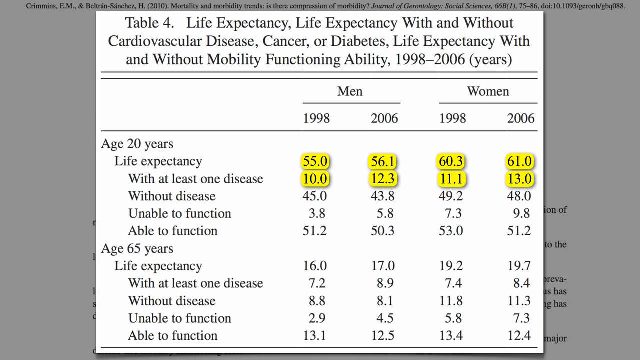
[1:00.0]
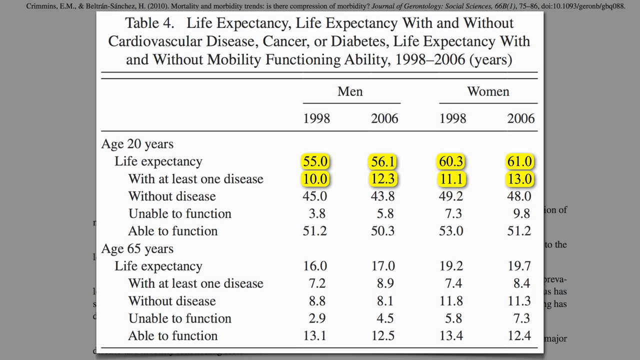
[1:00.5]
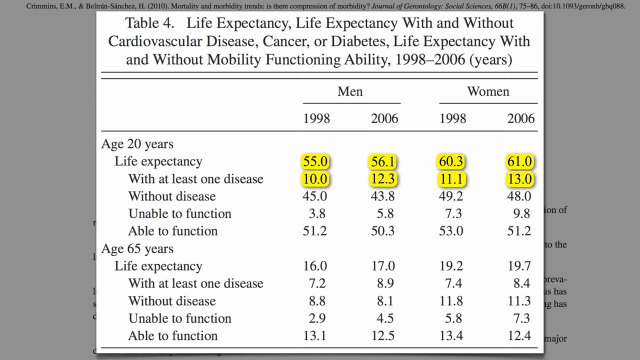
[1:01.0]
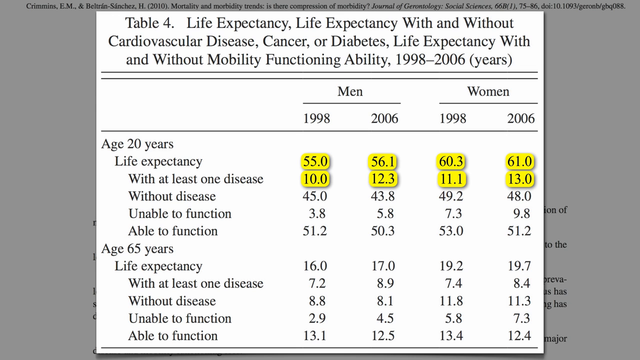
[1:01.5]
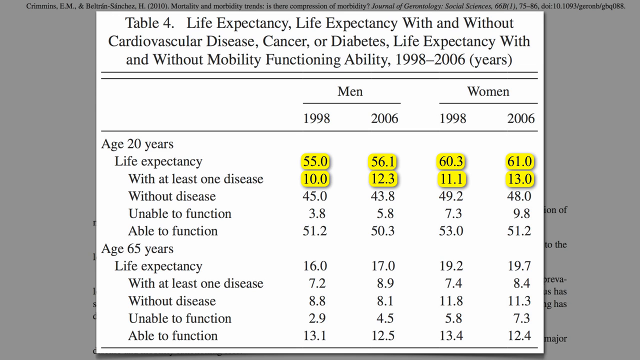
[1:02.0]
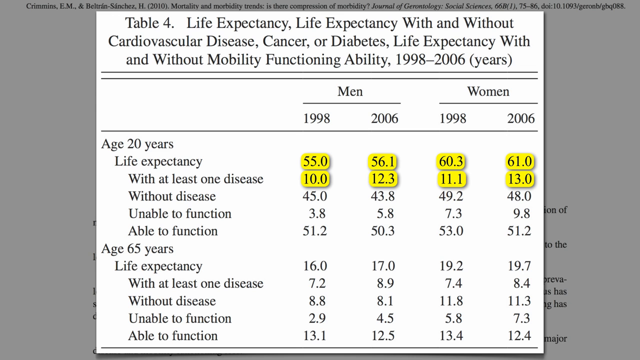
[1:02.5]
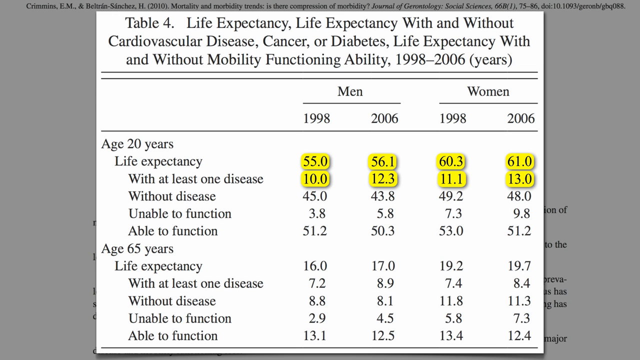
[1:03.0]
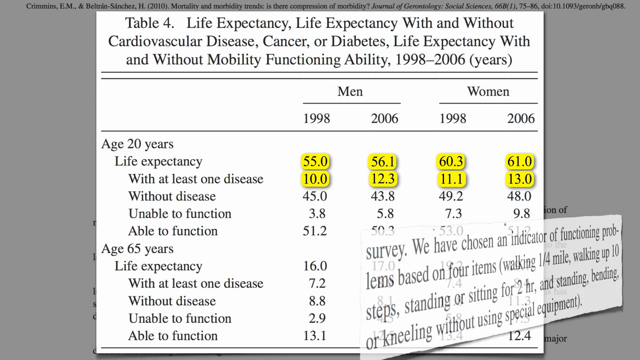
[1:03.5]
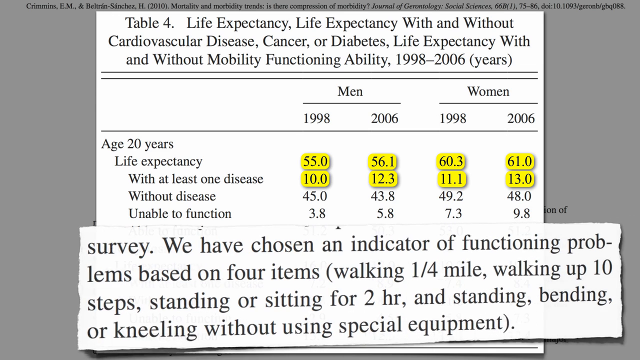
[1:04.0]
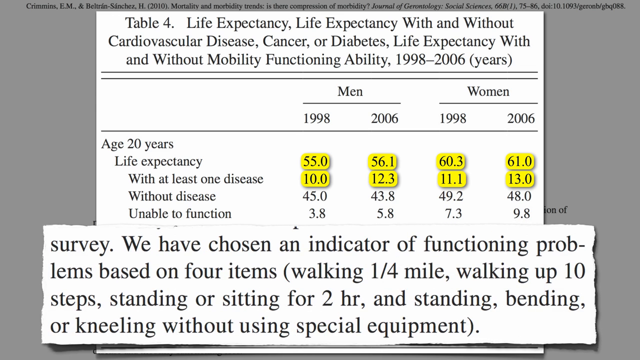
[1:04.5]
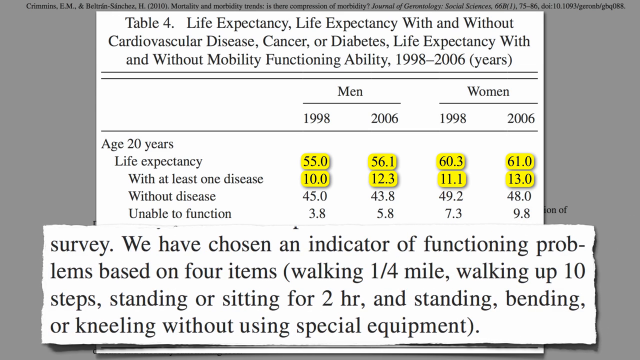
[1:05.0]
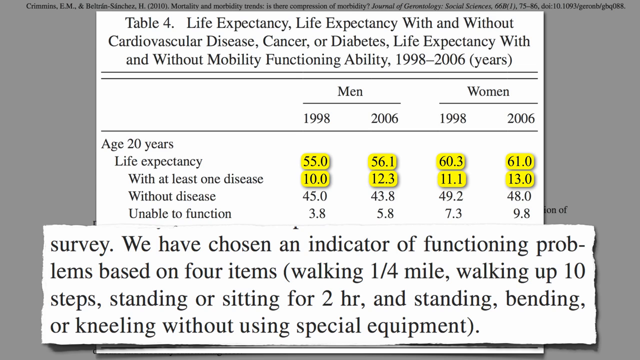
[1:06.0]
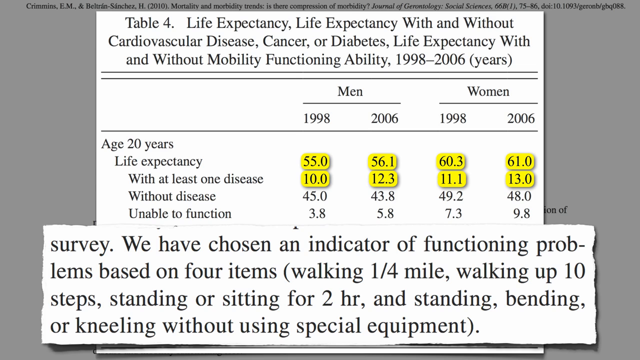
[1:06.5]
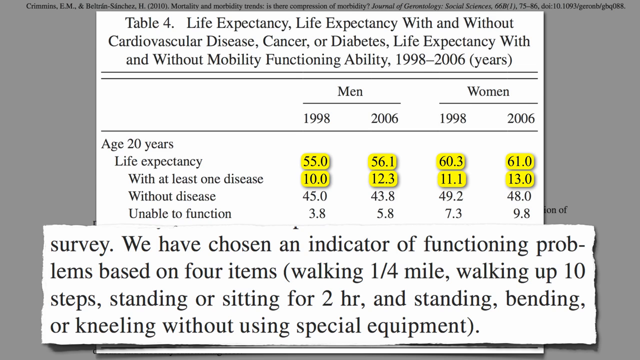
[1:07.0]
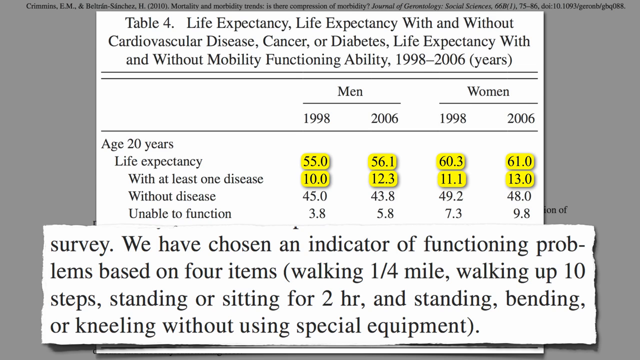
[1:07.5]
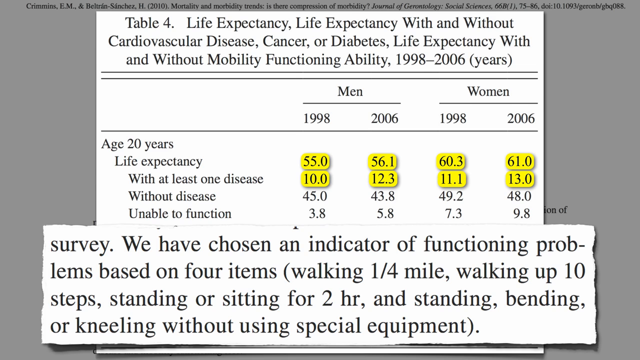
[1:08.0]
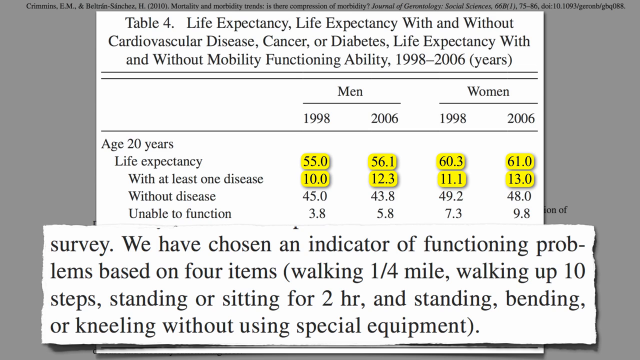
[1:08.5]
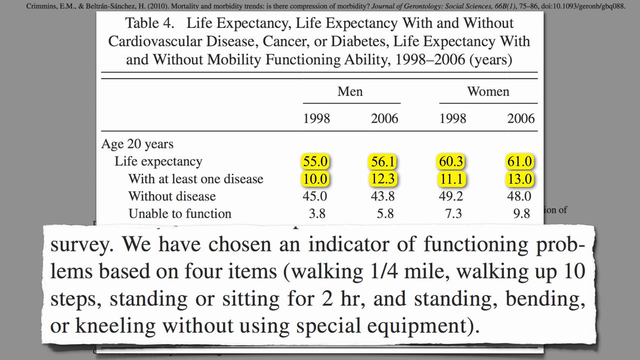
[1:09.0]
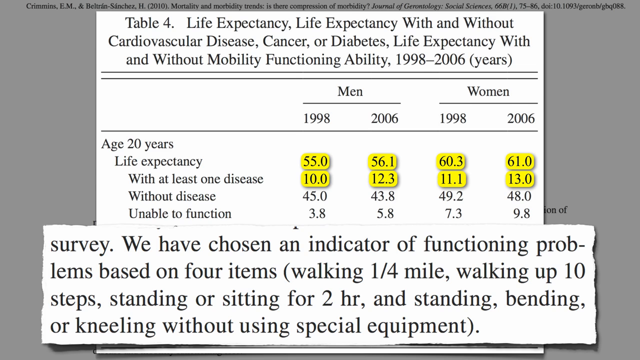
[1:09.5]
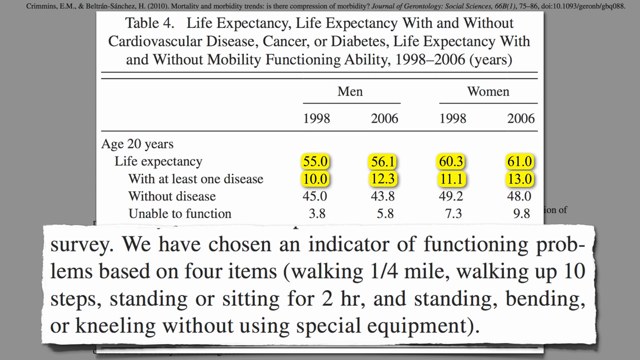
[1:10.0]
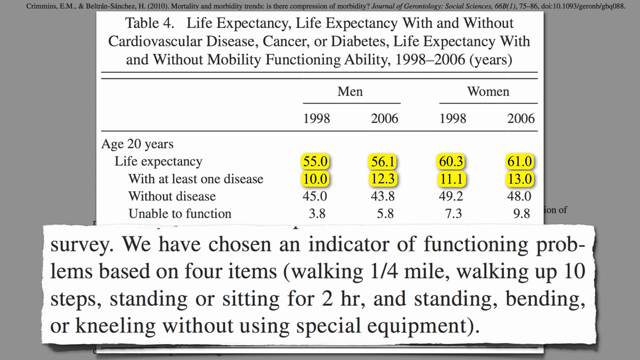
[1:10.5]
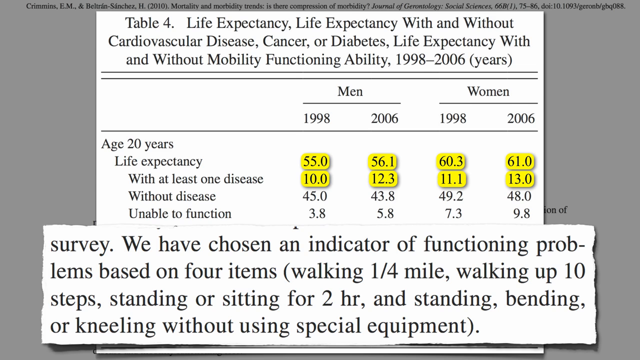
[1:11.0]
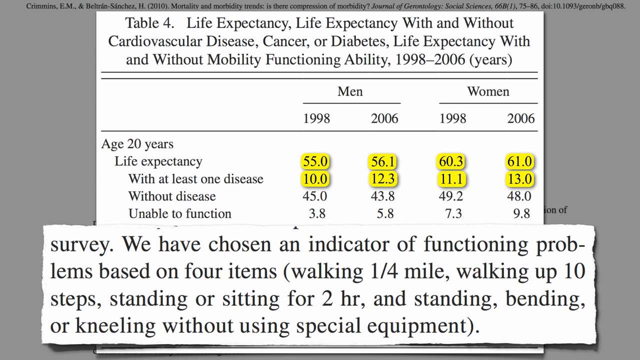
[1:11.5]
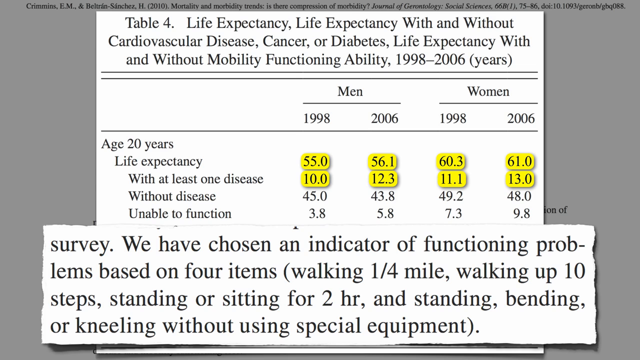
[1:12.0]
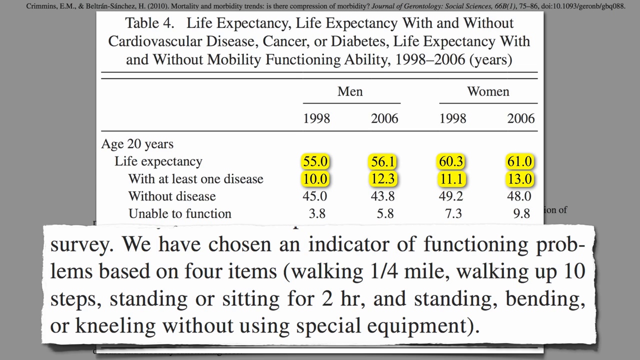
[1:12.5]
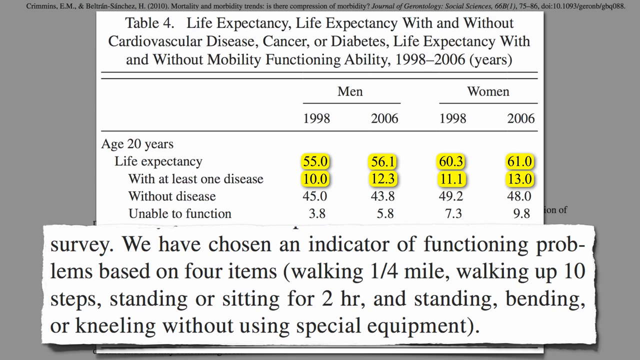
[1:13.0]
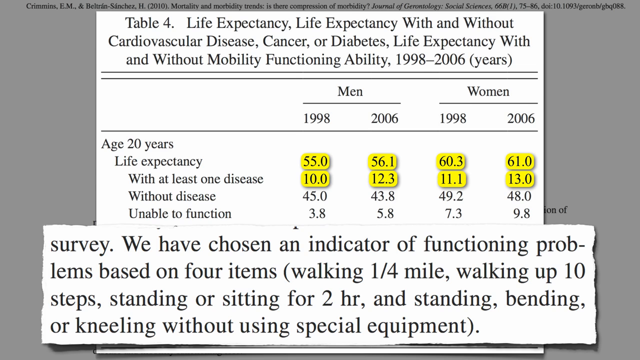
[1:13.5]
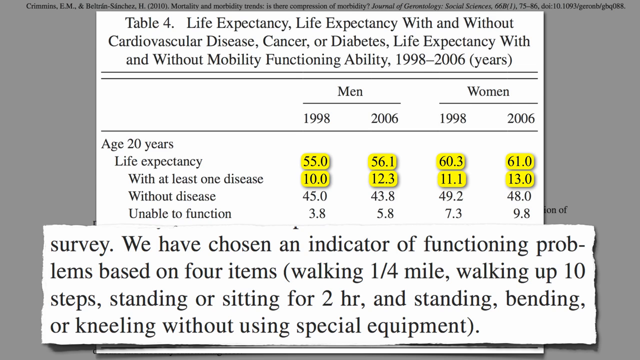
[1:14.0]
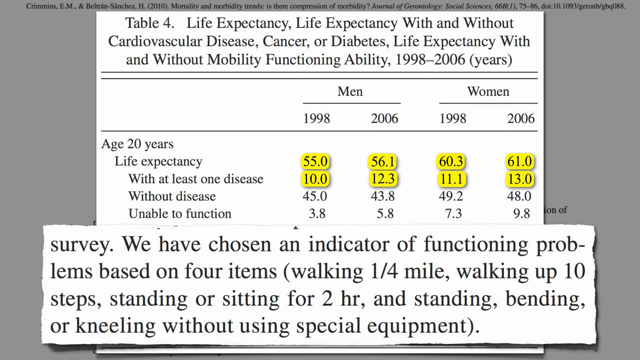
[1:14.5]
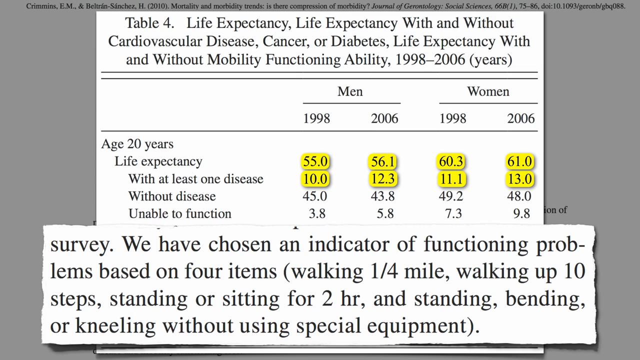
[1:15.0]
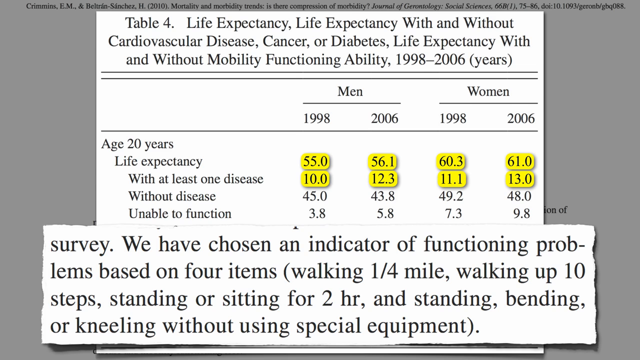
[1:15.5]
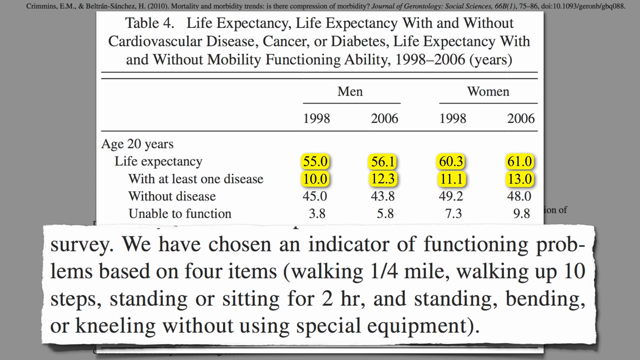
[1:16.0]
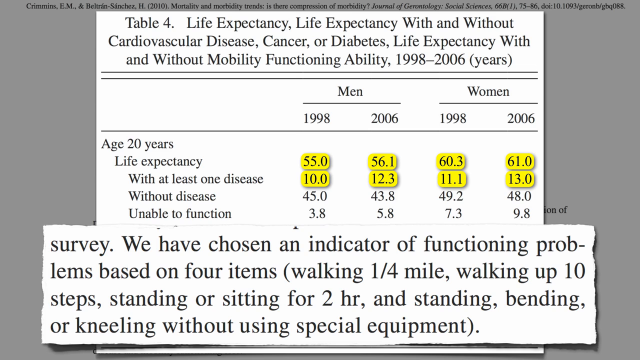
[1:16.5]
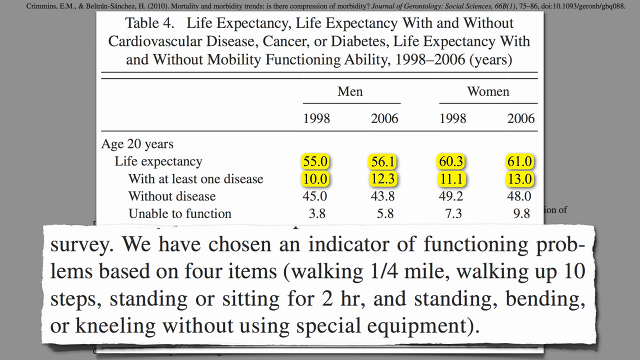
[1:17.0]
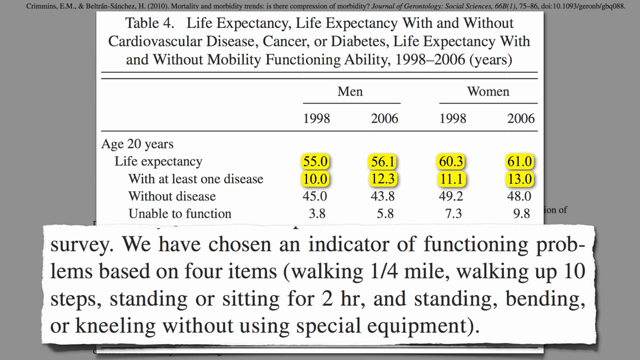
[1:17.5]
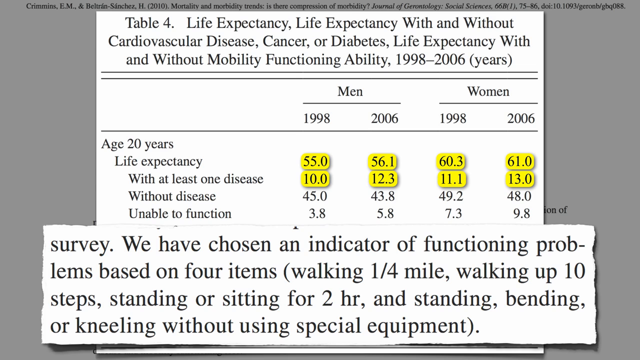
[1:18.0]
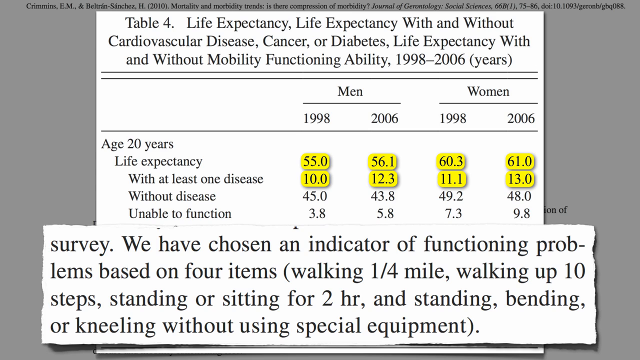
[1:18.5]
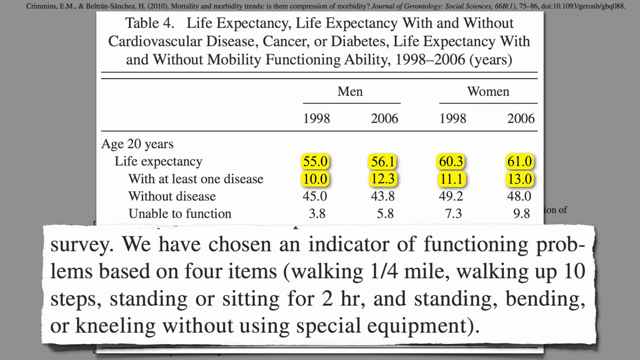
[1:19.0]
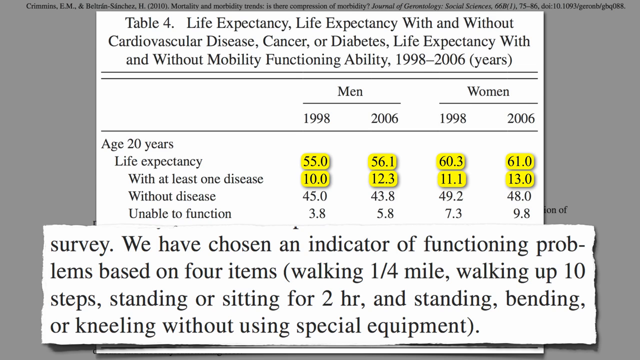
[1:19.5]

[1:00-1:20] The same table remains on screen with the same figures highlighted. Soon after, a snippet that appears to come from the paper is shown, reading "We have chosen an indicator of functioning problems based on four items" followed by a parenthesis listing "walking one-fourth of a mile, walking up ten steps, standing or sitting for two hours, and standing, bending, or kneeling without using special equipment." Near the very end, the snippet is brought down and the table returns. The table compares life expectancy in each category not only for age 20 years but also for age 65 years.